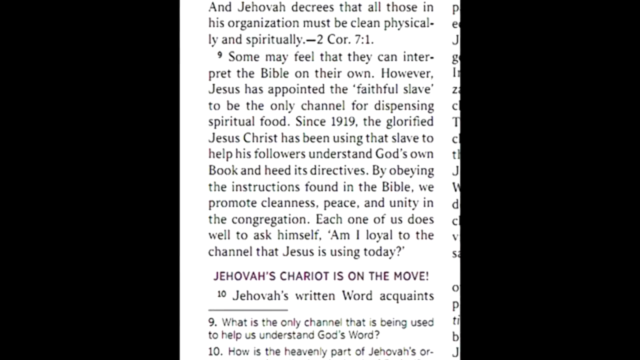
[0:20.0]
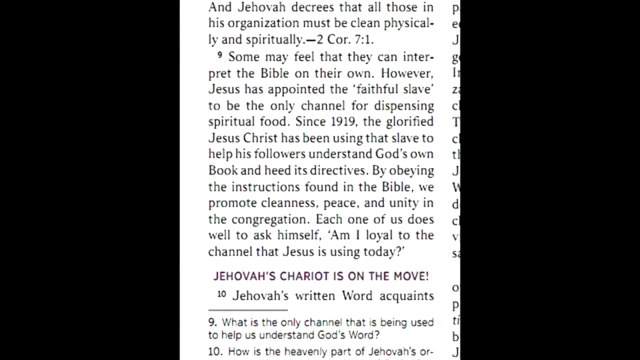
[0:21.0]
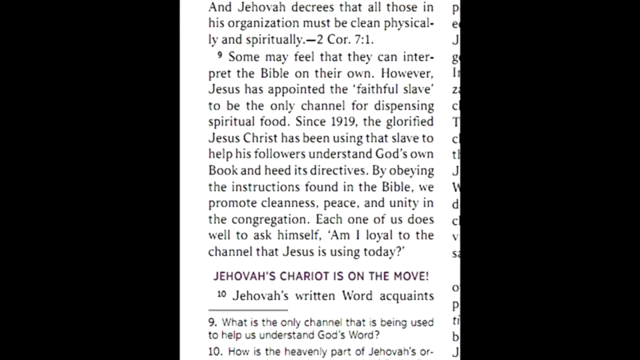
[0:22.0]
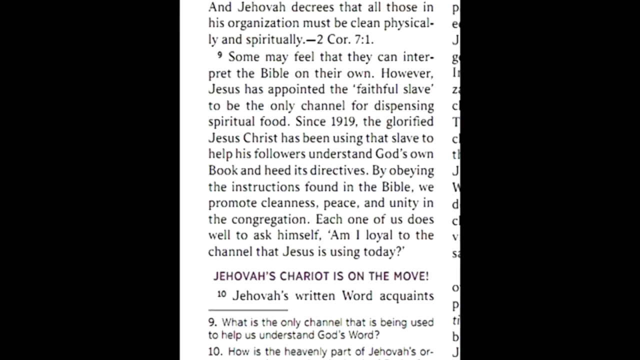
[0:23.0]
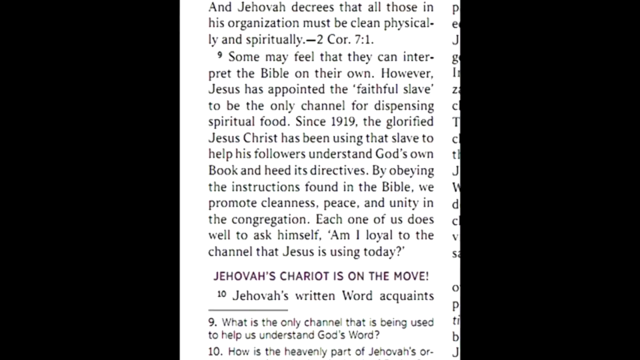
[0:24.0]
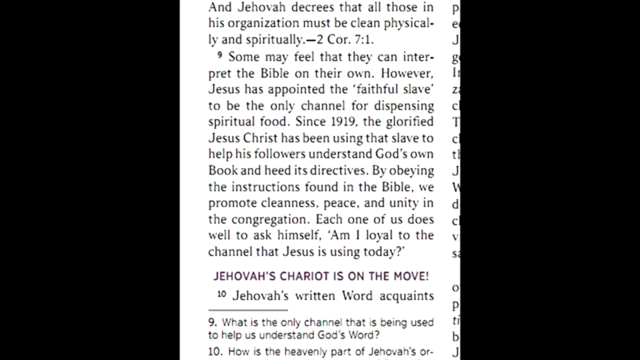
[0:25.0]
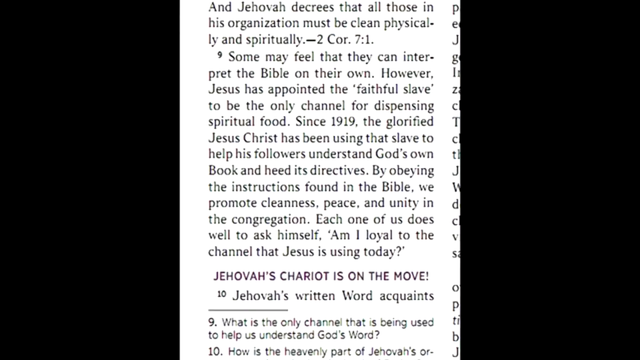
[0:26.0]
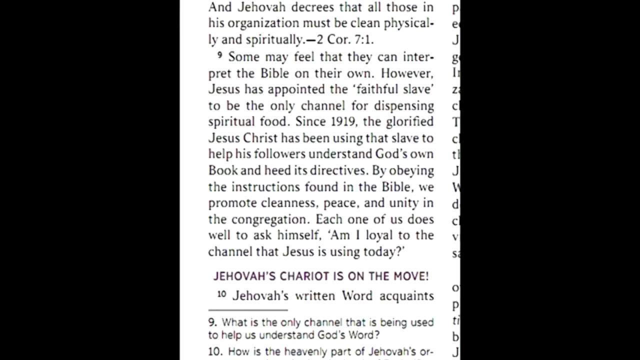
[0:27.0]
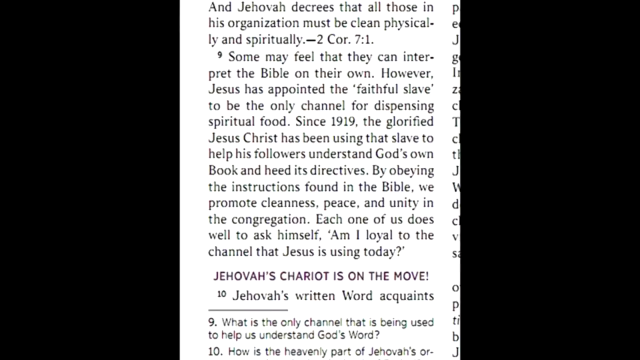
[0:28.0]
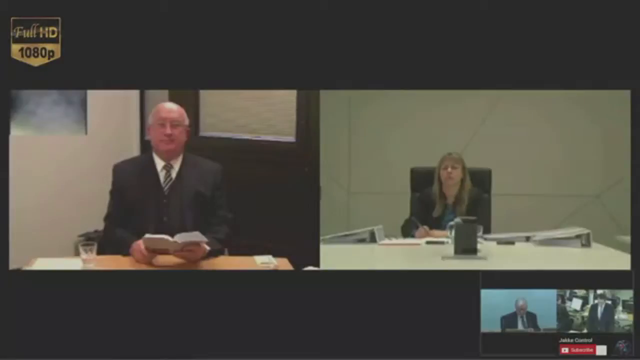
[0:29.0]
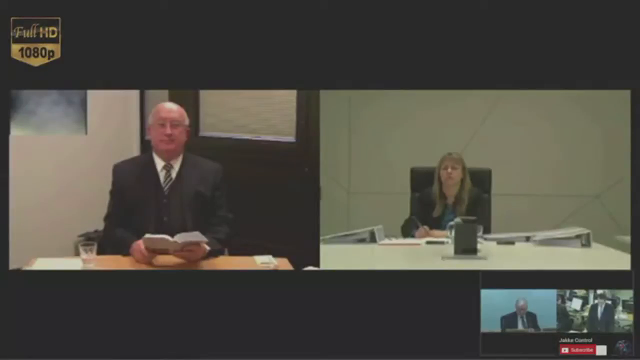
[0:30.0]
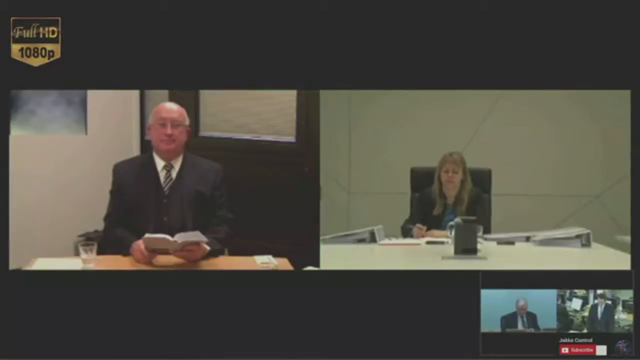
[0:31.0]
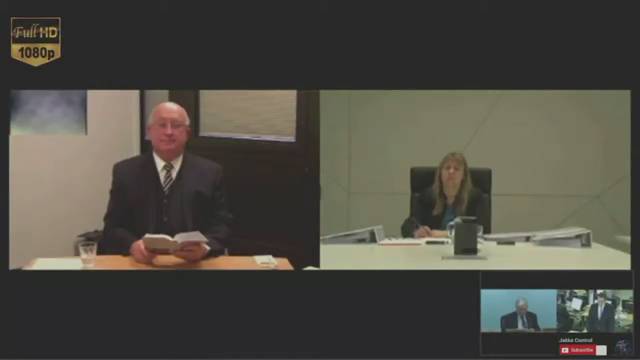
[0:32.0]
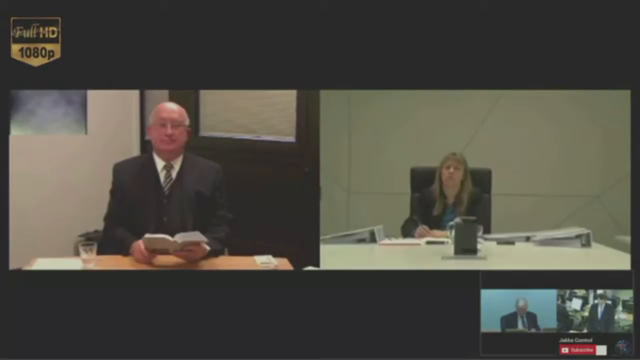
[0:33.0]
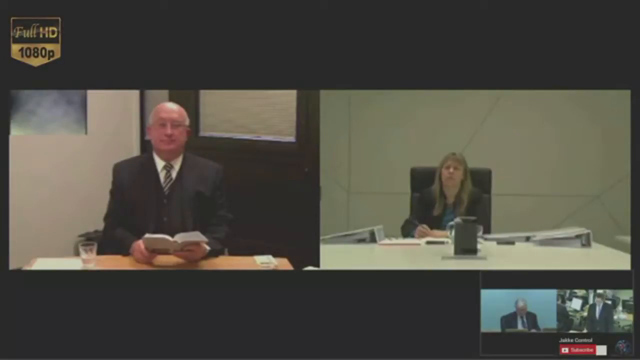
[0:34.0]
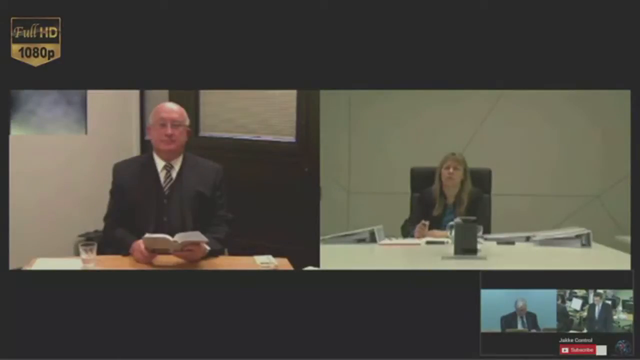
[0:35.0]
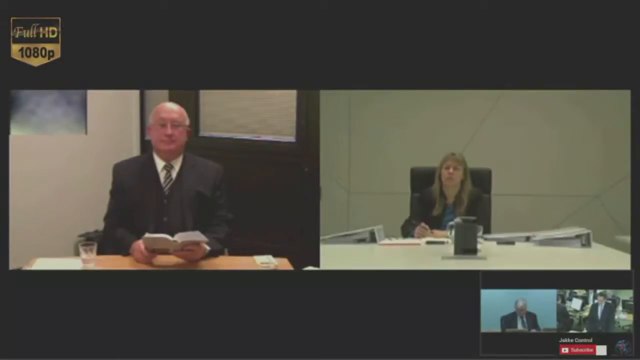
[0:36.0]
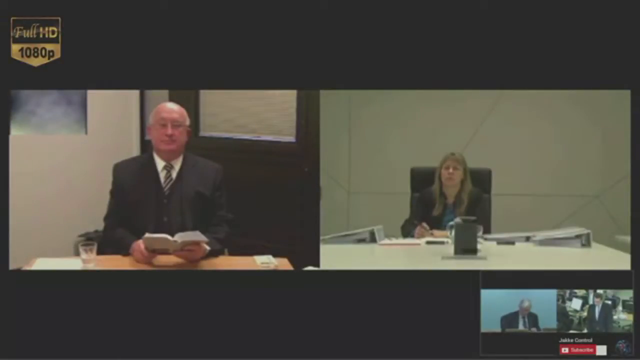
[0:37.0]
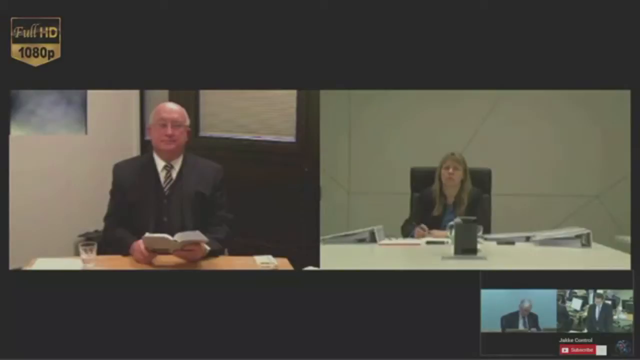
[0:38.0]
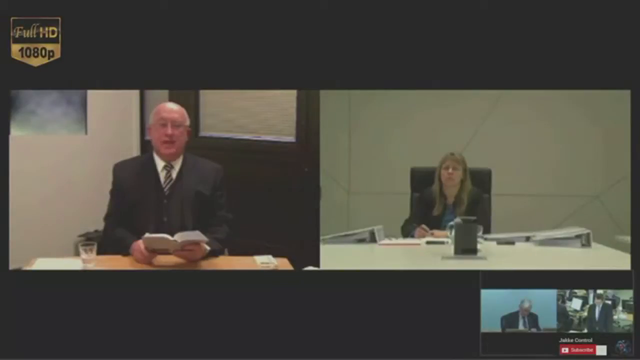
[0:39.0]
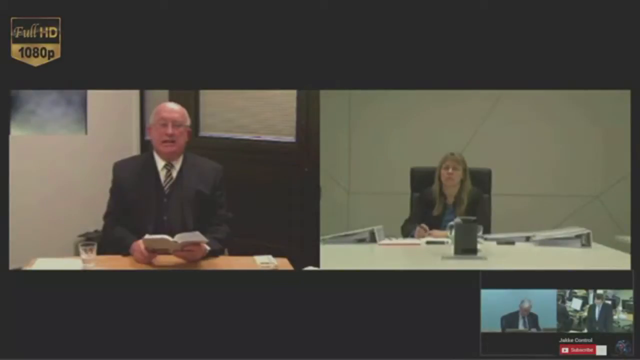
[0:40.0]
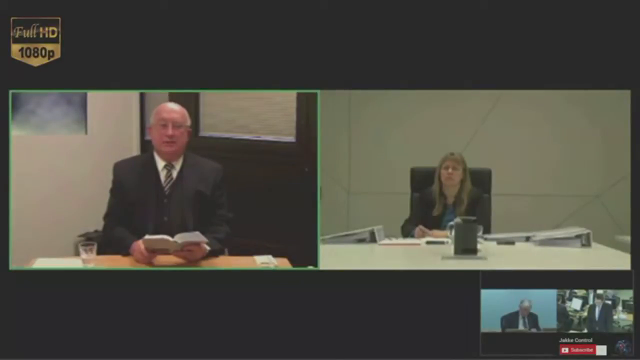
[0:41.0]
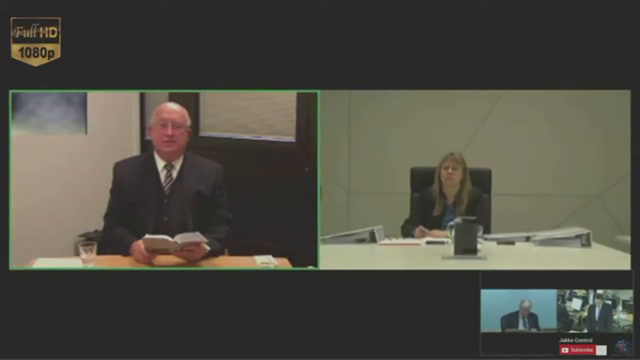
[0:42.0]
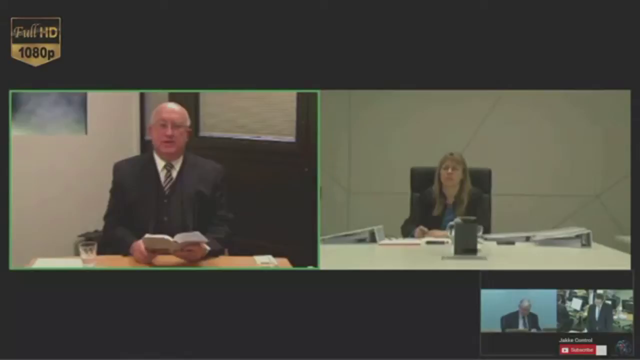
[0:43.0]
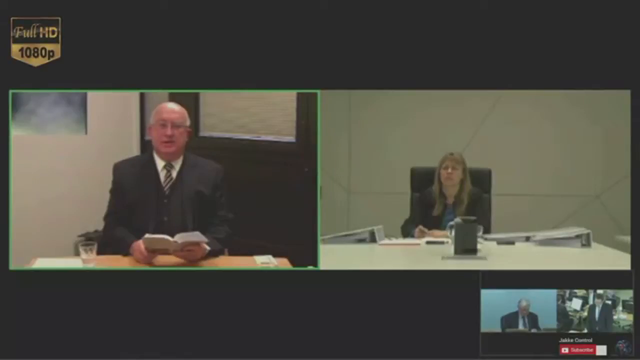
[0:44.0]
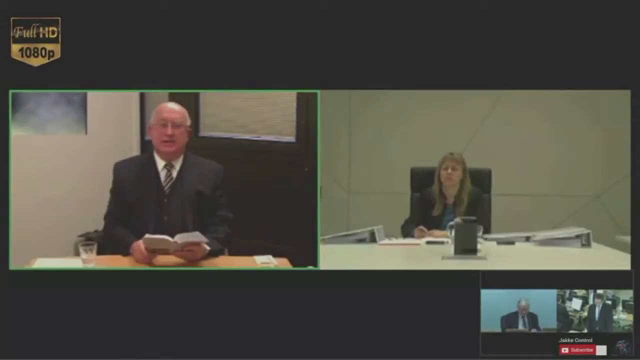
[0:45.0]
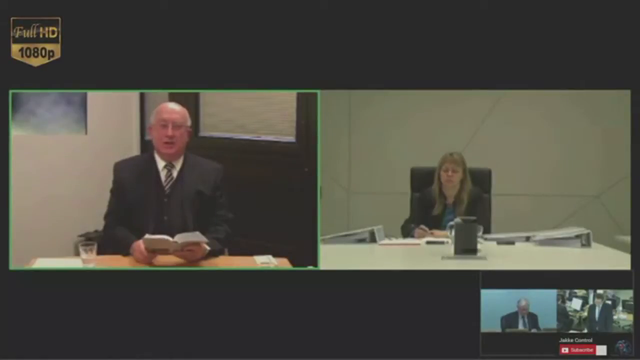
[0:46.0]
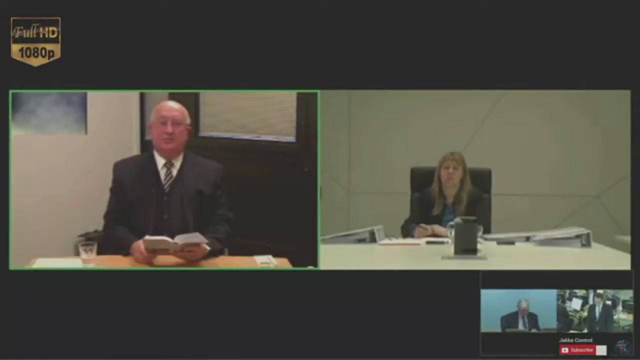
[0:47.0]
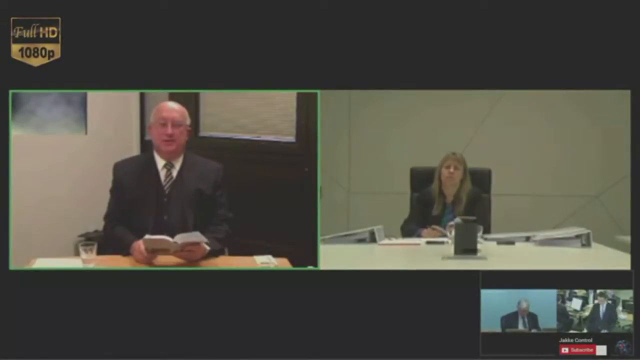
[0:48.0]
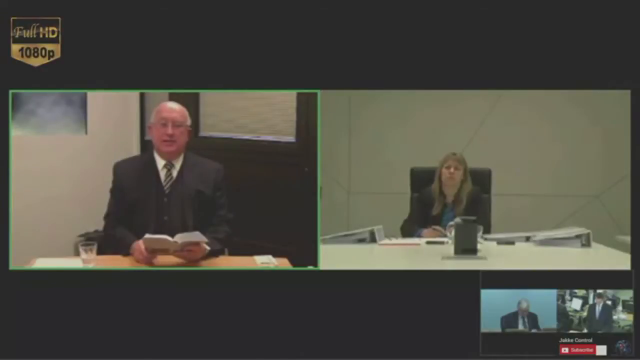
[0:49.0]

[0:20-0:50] The shot is zoomed in on the left side of the page, with a black border on the left and right sides. The page is white and the lettering black. A small number nine is next to the paragraph in focus, one full paragraph about 12 lines long. Text across the bottom begins "Jehovah's chariot is." The focused text reads: "some may feel that they can interpret the Bible on their own. However, Jesus has appointed the faithful slave to be the only channel for dispensing spiritual food. Since 1919, the glorified Jesus Christ has been using that slave to help his followers understand God's own book and heed its directions. By obeying the instructions found in the Bible, we promote cleanliness, peace, and unity in the congregation. Each one of us does well to ask himself, am I loyal to the channel that Jesus is using today?" It then cuts to a shot with black borders across the top and bottom and a full HD 1080p icon in the top left. There are two videos. On the left, a man in a black suit with gray hair and glasses holds a book out in front of him, facing the camera. On the right, a woman in a black chair with long blonde hair past her shoulder wears a black outfit, with items on the table in front of her. He stays static, while her hand holding a pen on the table moves up and down just a little. He starts talking; she barely moves, and he is completely still.